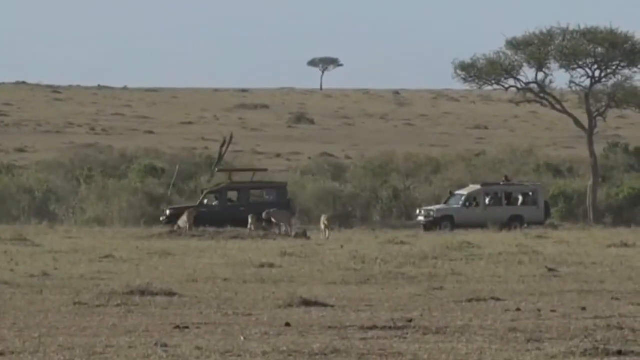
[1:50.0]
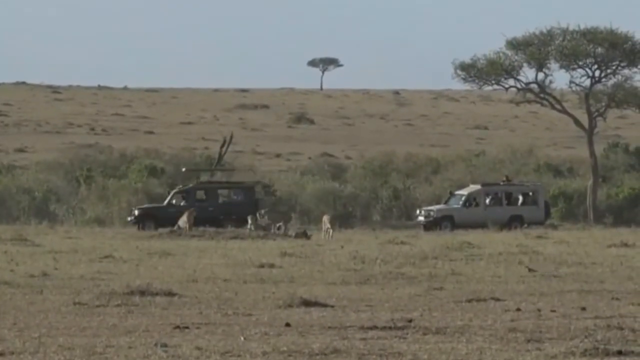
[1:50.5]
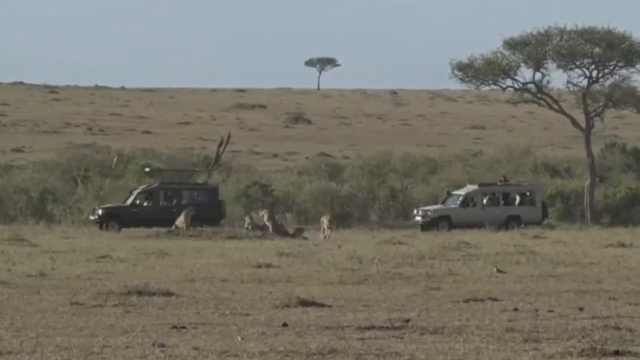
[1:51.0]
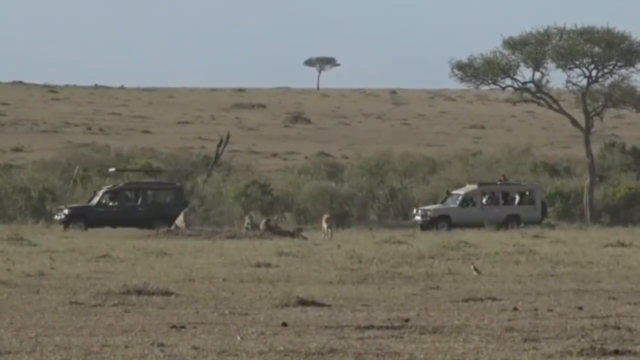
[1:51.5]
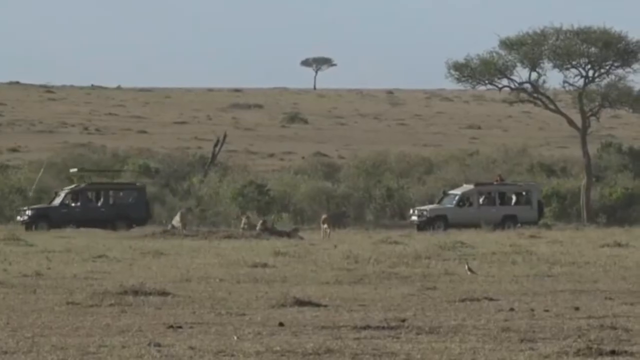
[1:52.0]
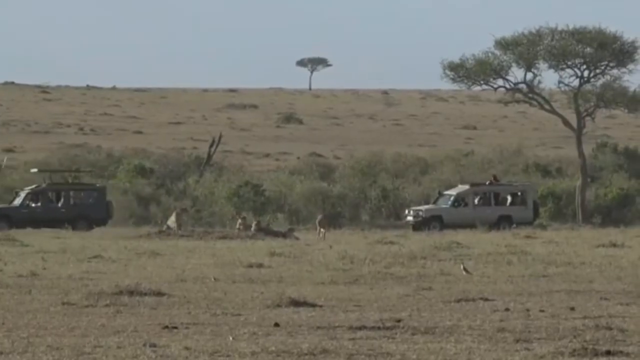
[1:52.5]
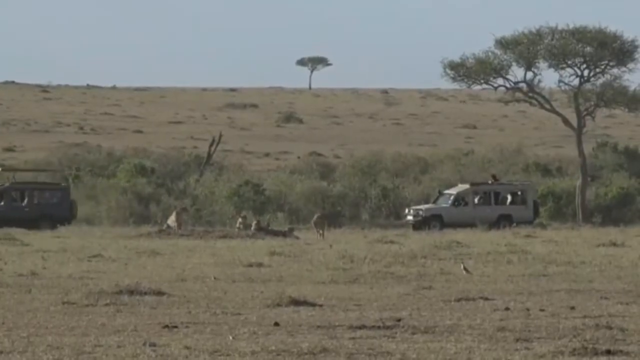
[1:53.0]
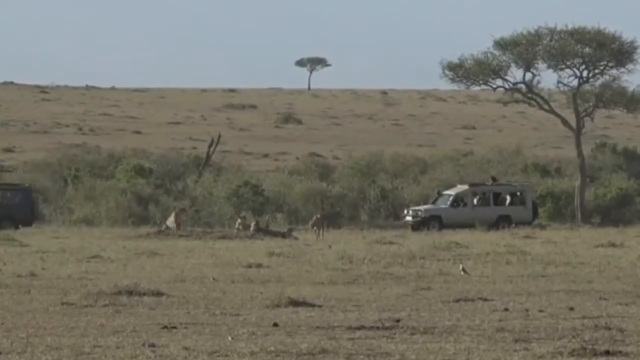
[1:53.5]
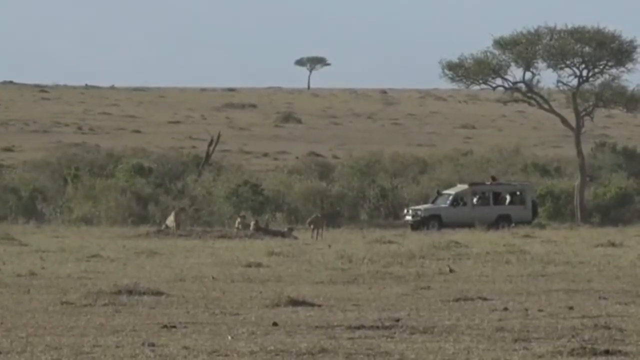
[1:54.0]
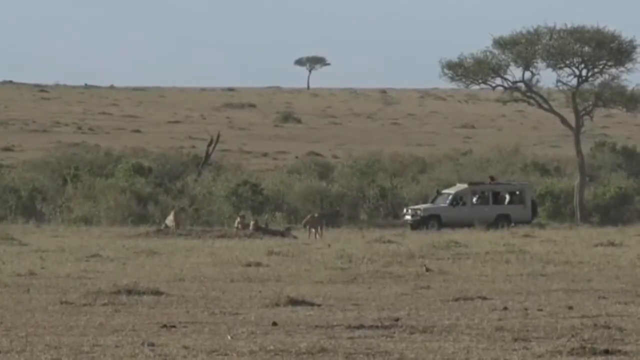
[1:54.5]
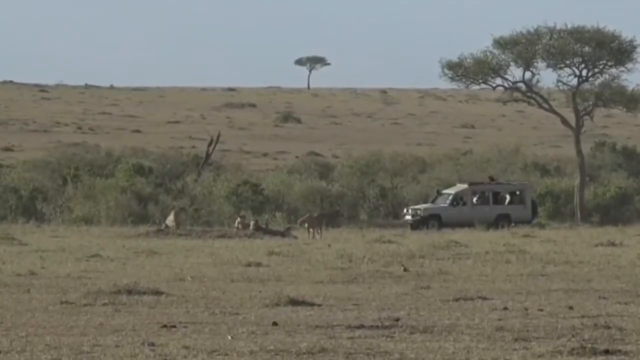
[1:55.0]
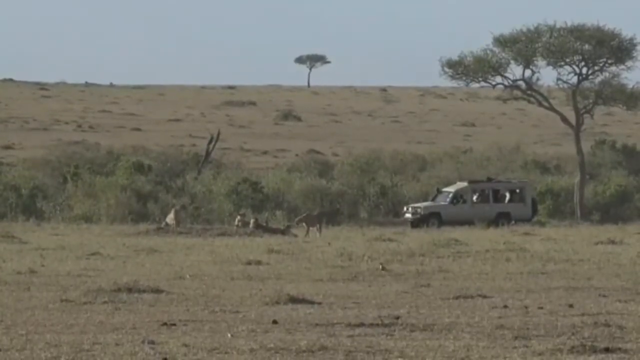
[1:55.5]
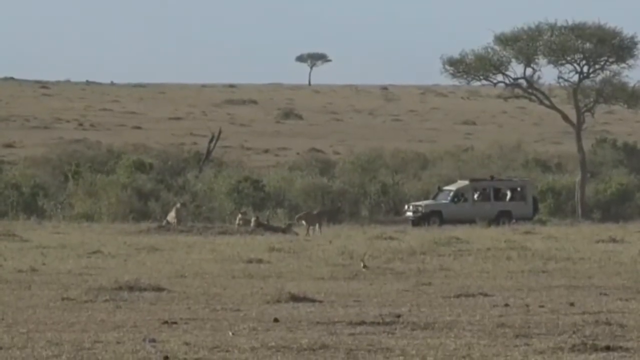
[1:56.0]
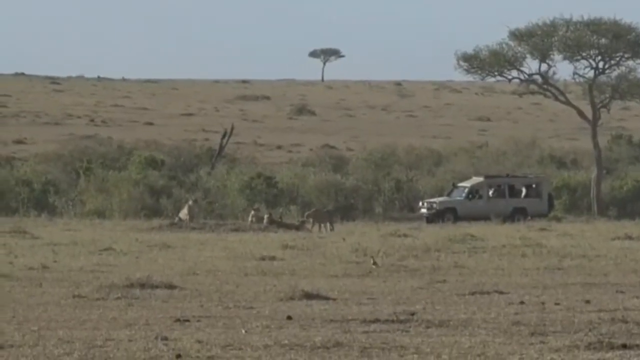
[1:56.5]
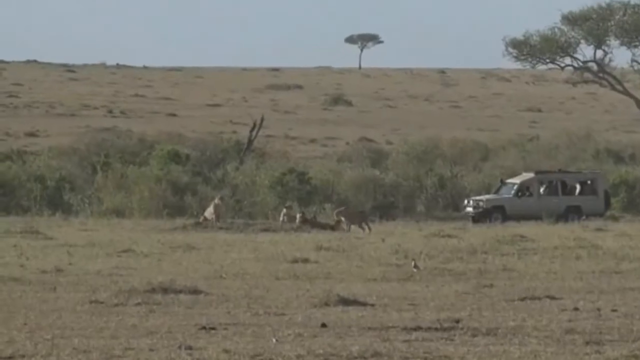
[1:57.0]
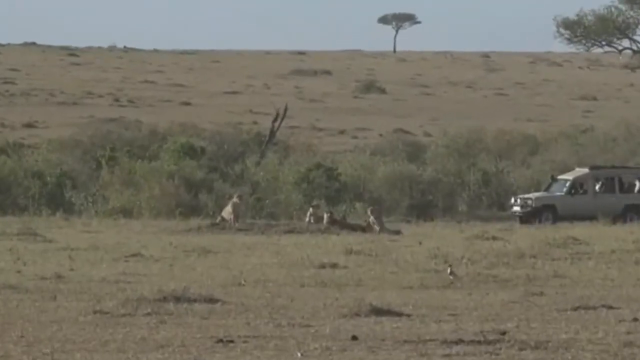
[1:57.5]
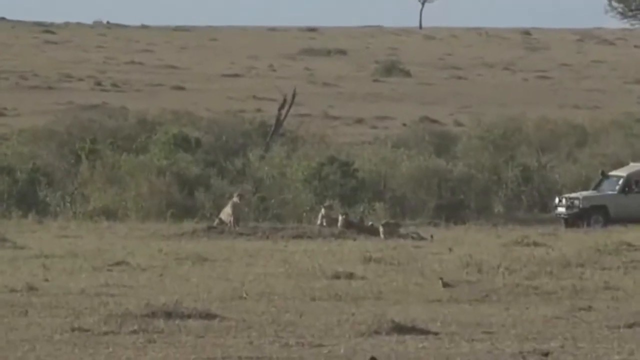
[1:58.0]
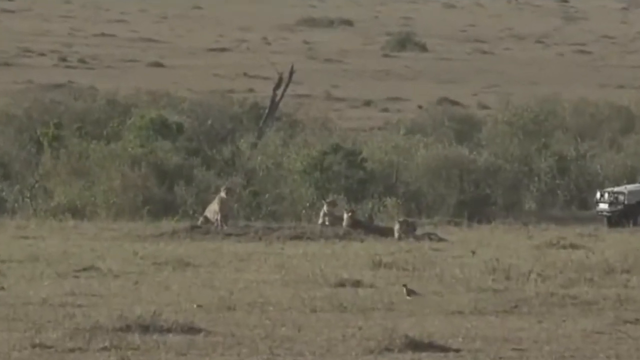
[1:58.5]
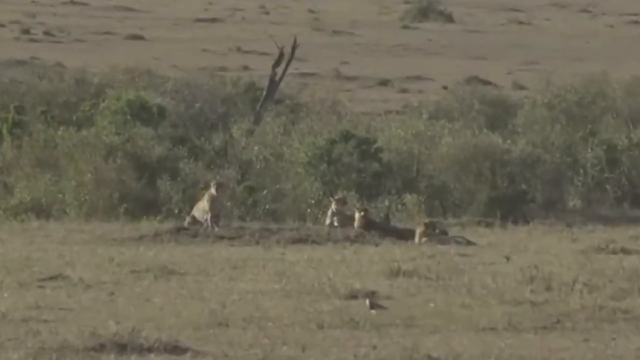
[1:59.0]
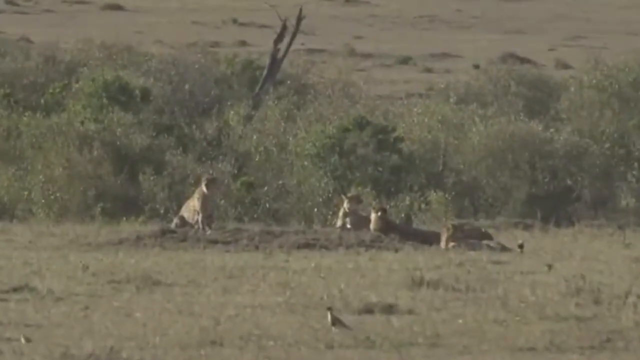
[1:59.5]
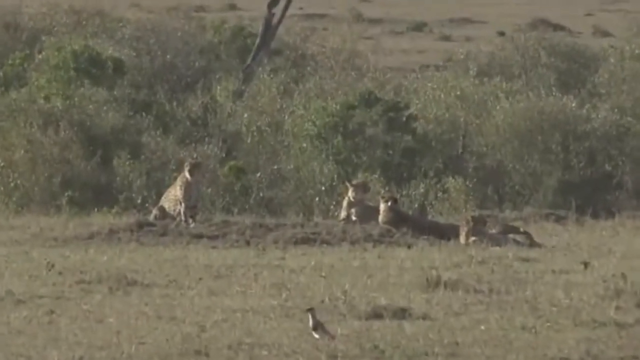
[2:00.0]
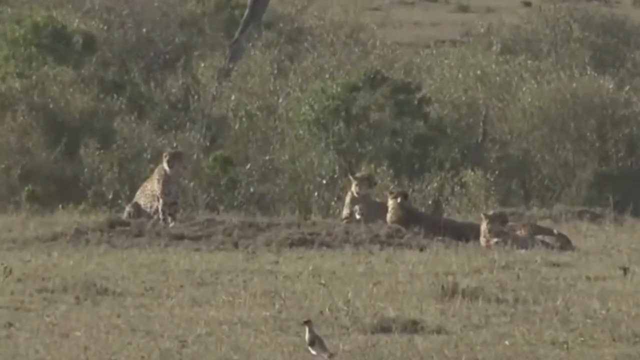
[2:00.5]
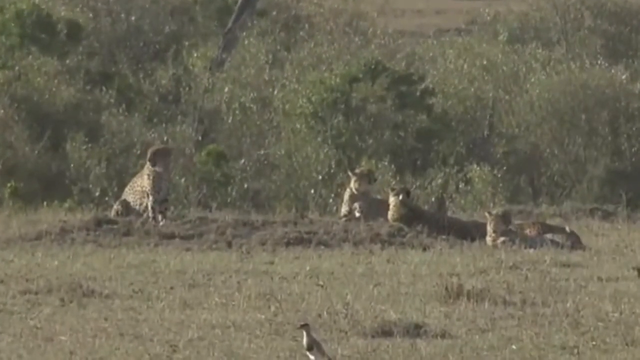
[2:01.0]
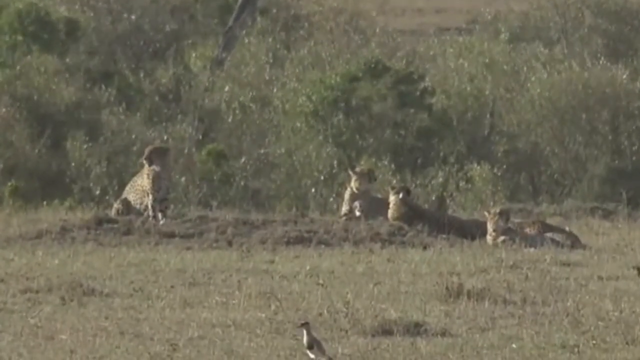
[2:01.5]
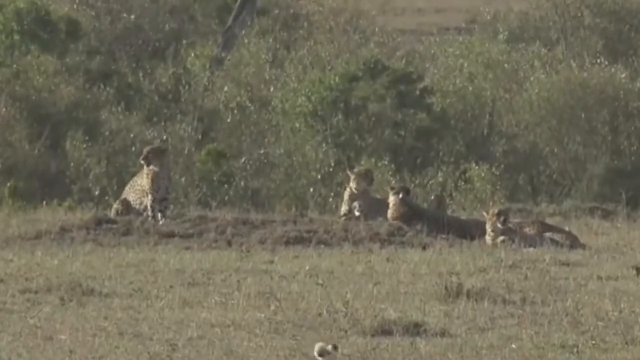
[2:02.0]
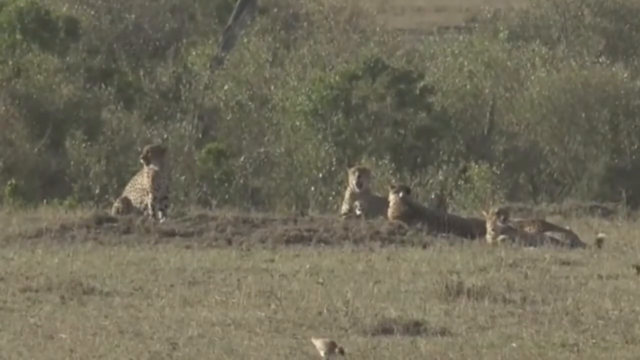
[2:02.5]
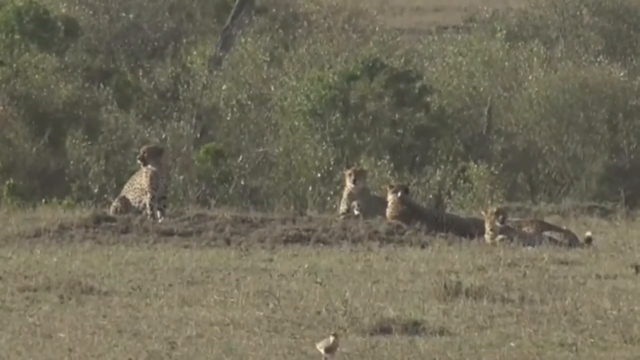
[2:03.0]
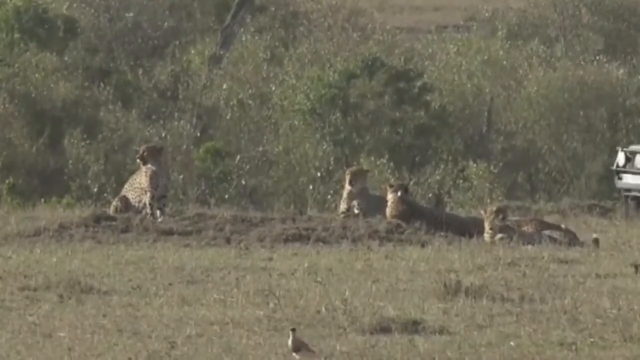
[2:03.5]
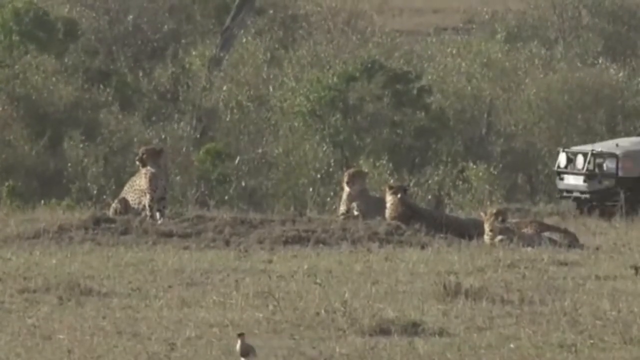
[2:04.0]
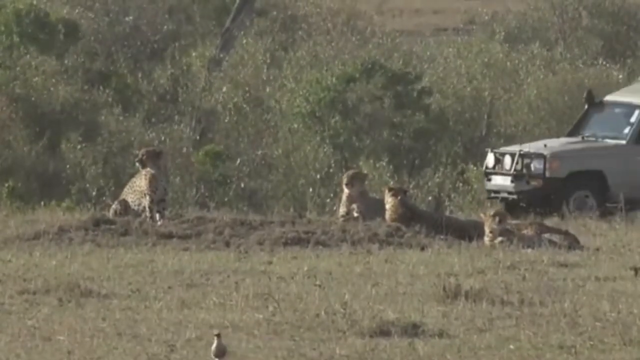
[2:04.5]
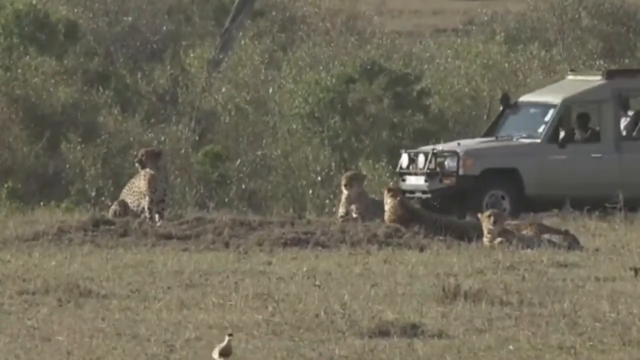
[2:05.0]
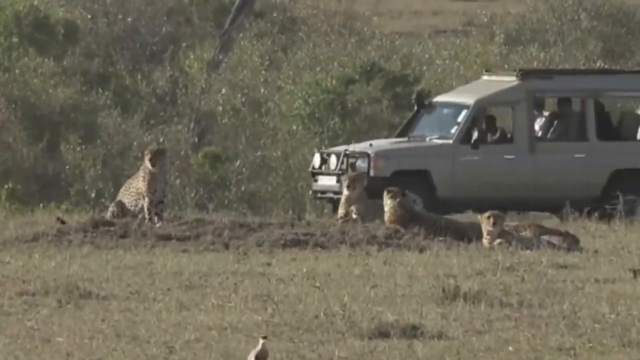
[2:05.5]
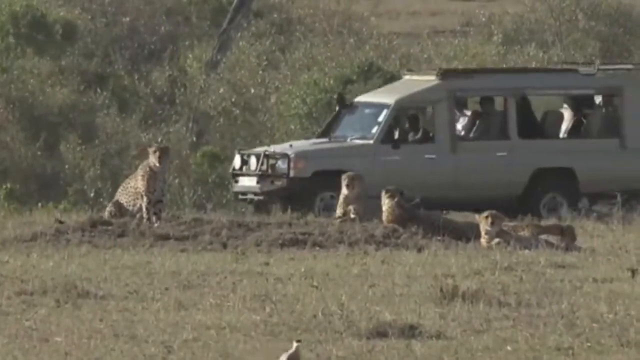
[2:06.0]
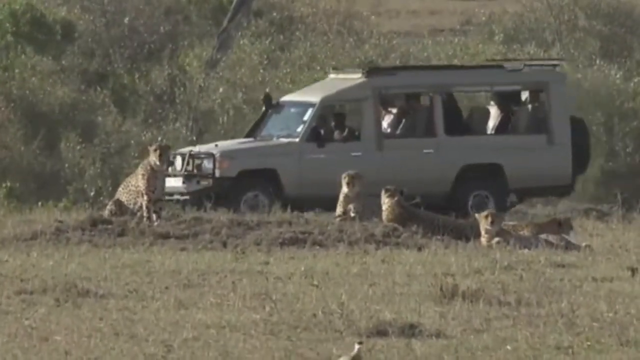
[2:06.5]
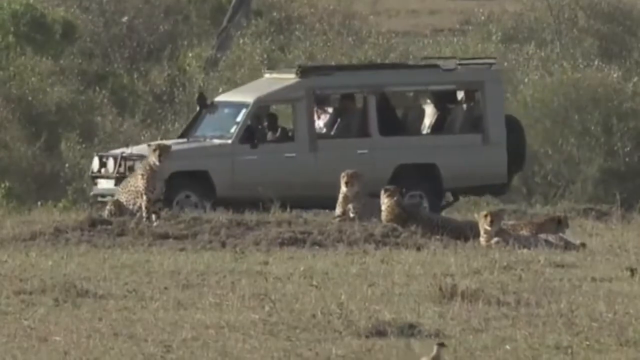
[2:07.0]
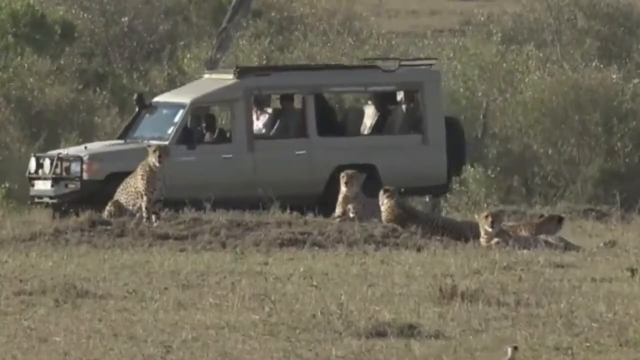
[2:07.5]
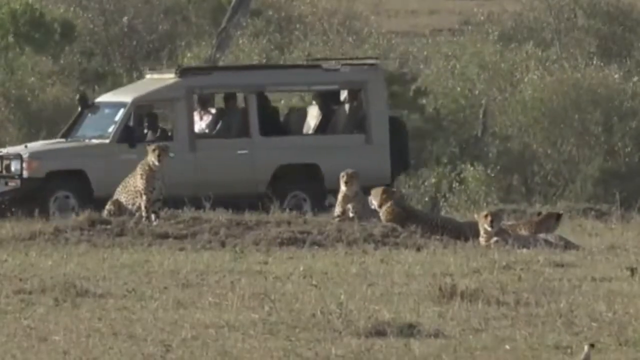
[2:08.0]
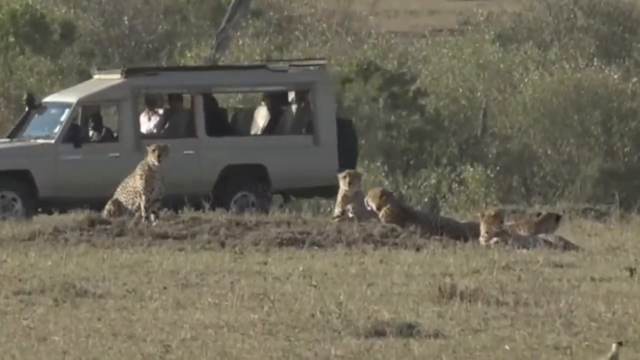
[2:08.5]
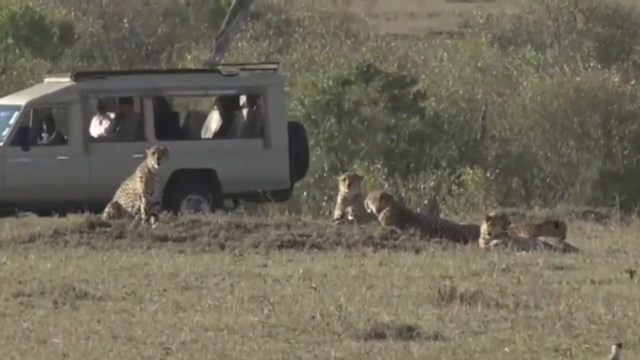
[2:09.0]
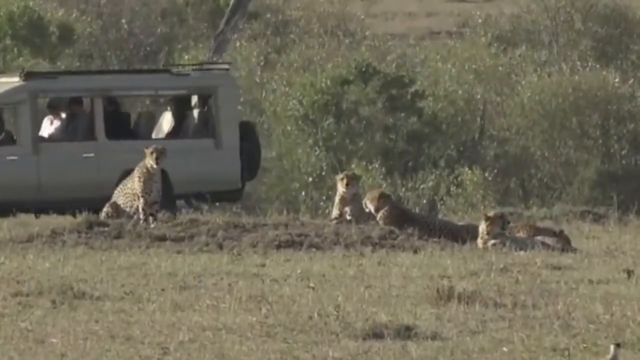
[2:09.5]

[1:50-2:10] A group of cheetahs relaxes in the sun in a natural environment, a sort of desert landscape with a few sparse trees here and there. Several vehicles are in the background behind the cheetahs; they look like tour buses, maybe for tourists. One is a dark brown shade and looks a bit like a sort of Land Rover style vehicle, with a raised roof in the center that allows people to stand up; it drives past the cheetahs. Another vehicle, lighter in color, is on the right-hand side, with people's heads above the roof looking out. The cheetahs keep relaxing in the sun, and then the other vehicle drives past them. The cheetahs don't really pay much attention to it.